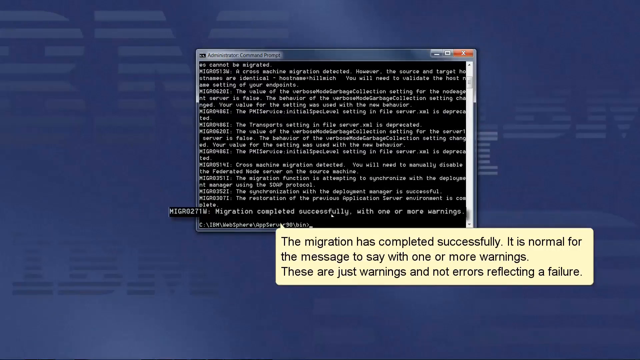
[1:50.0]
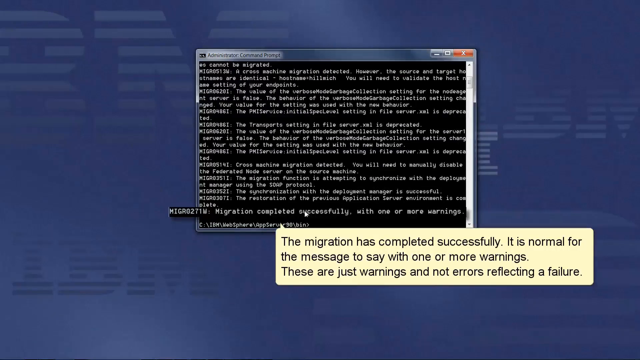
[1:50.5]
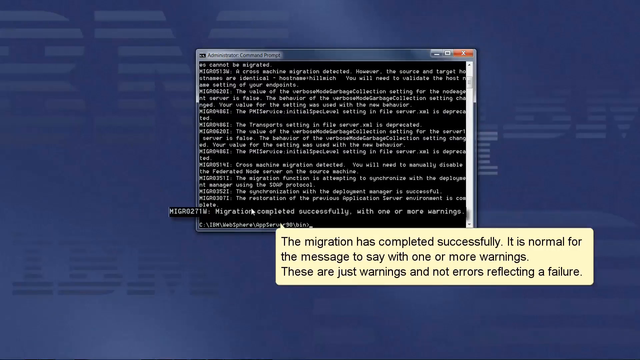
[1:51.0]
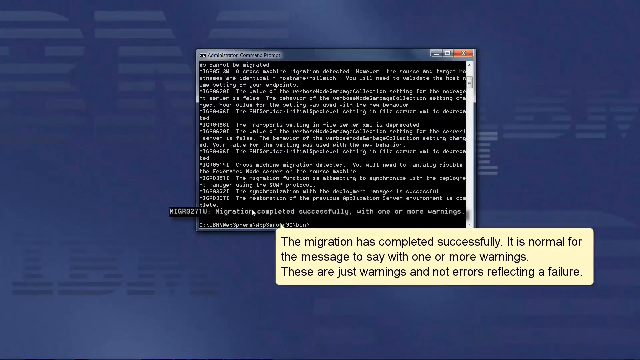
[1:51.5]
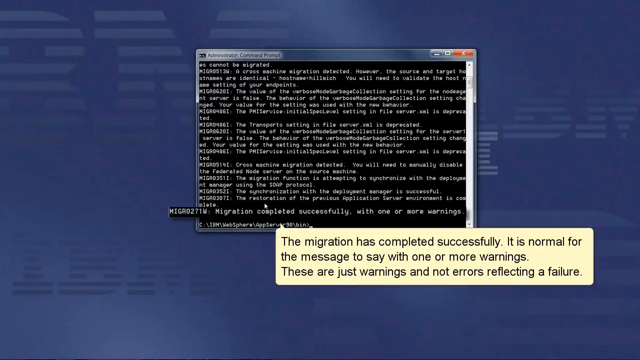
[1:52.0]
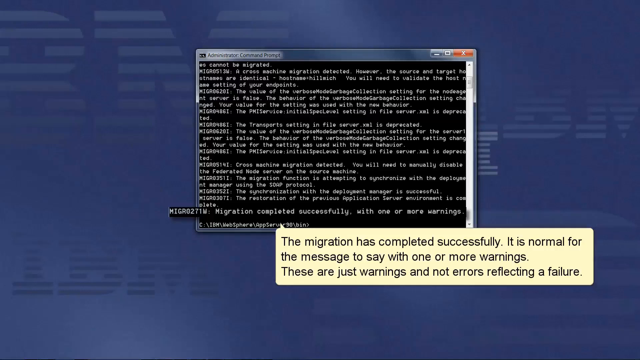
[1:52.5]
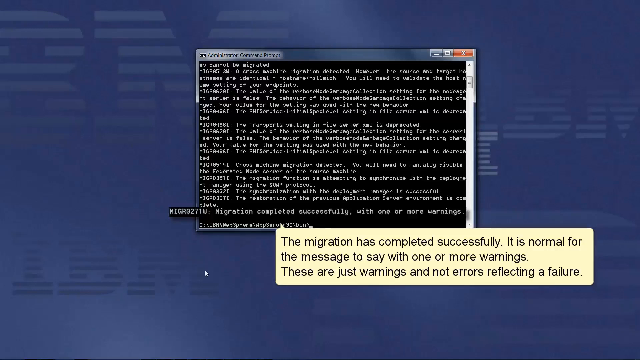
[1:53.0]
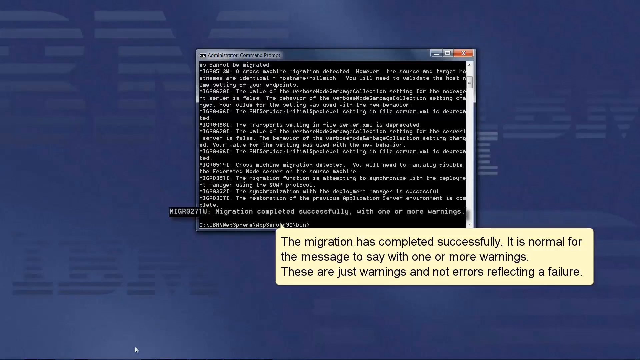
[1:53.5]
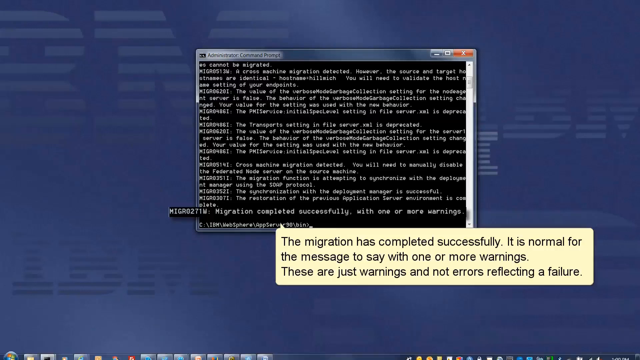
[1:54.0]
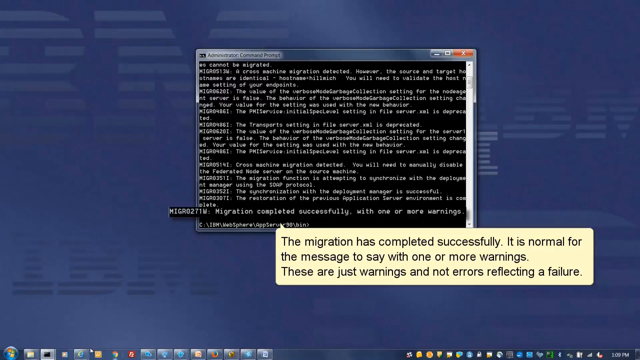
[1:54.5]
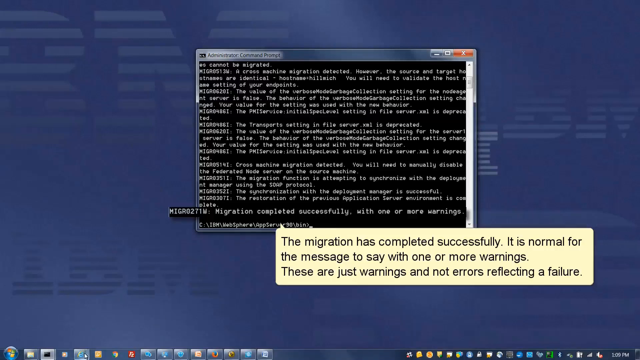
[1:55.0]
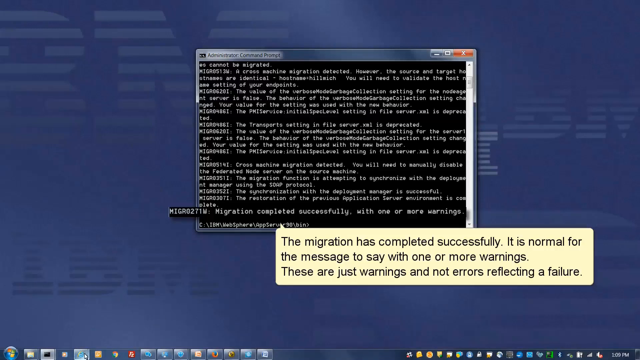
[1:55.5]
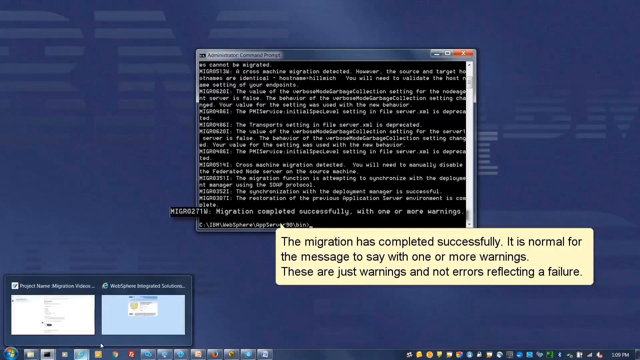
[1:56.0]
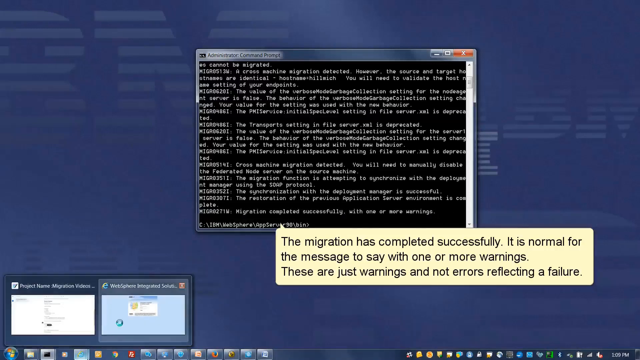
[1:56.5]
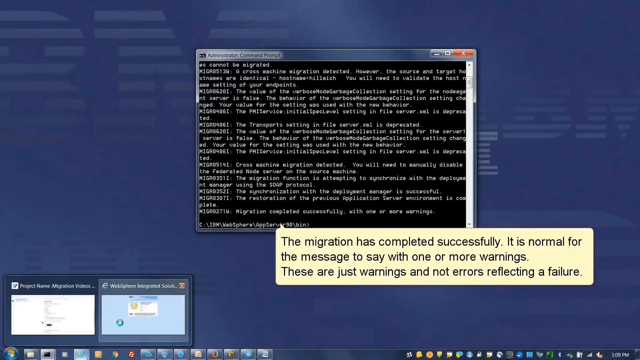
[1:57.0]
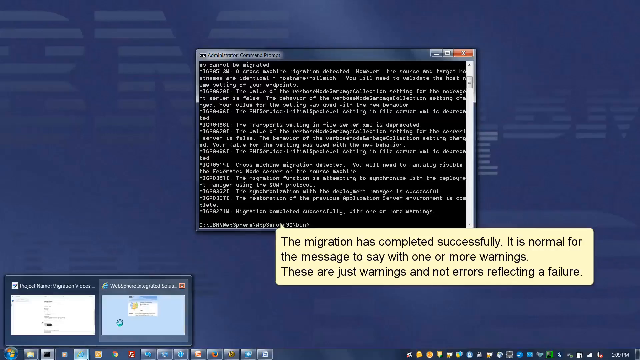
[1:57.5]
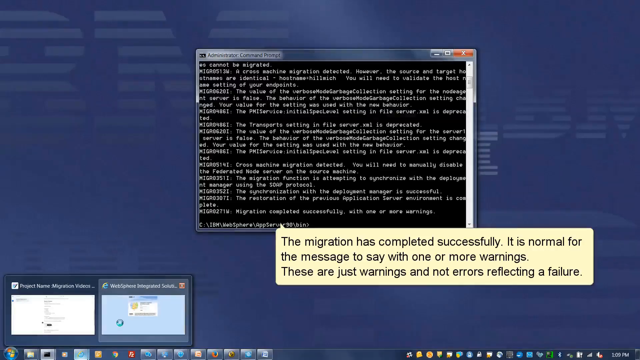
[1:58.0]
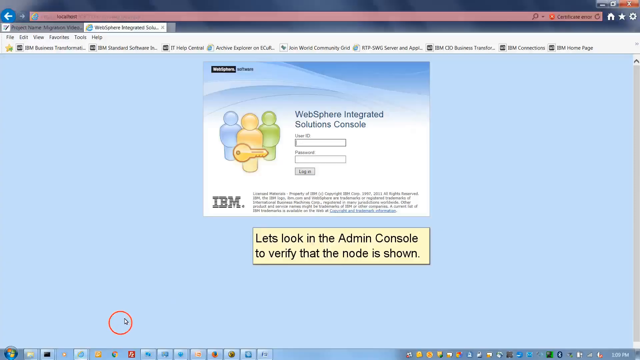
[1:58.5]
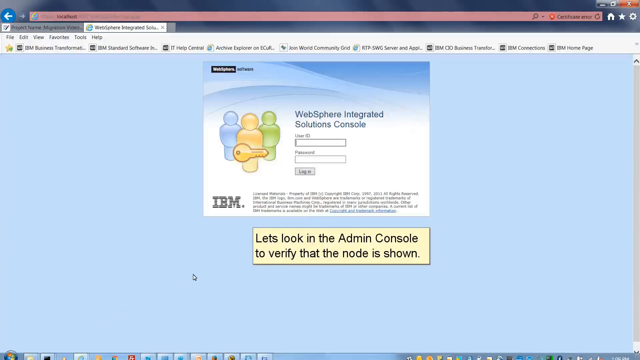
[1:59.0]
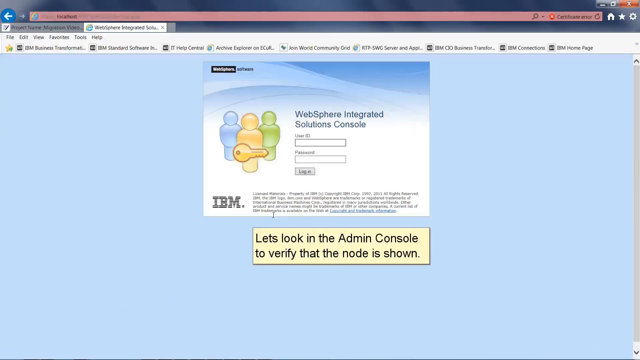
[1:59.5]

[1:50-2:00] The command prompt's last message states that the migration completed successfully with one or more warnings, and a yellow pop-up speech bubble pointing to it reads: "the migration has completed successfully. It is normal for the message to say with one or more warnings. These are just warnings and not errors reflecting a failure." The user moves the mouse to the bottom of the screen and hovers over the Internet Explorer icon in the system menu, which shows two different windows to choose from. The user clicks on the window on the right, opening a web page with a login form for the WebSphere Integrated Solutions Console. A little yellow box at the bottom reads "let's look in the admin console to verify that the node is shown."